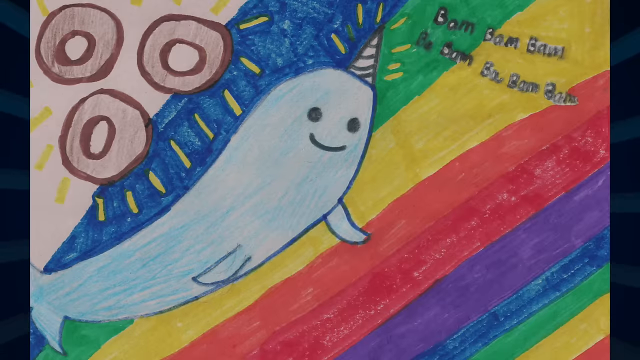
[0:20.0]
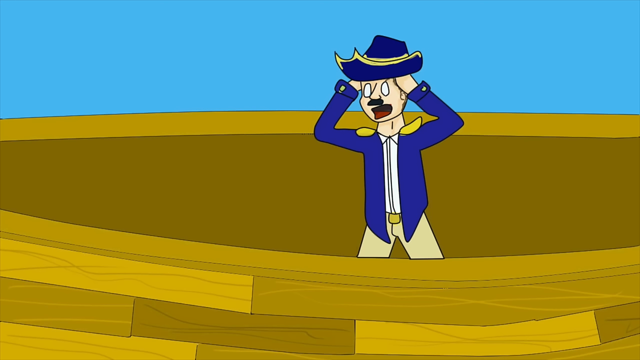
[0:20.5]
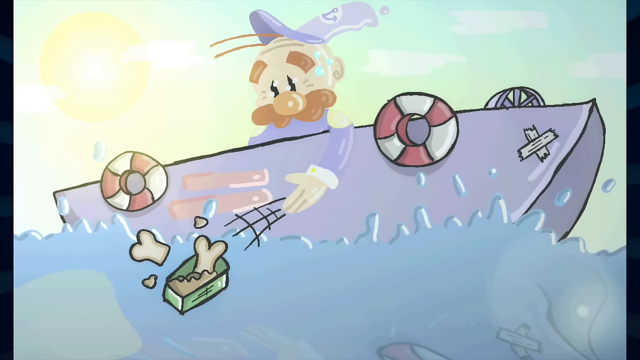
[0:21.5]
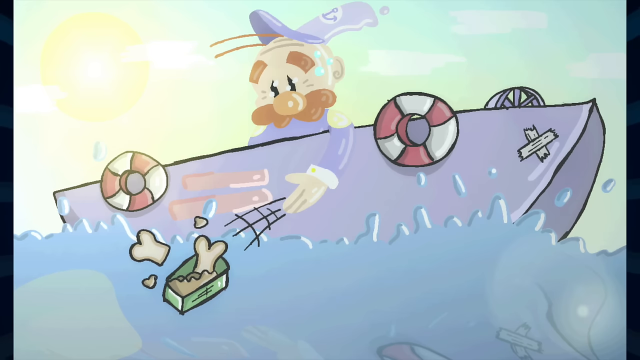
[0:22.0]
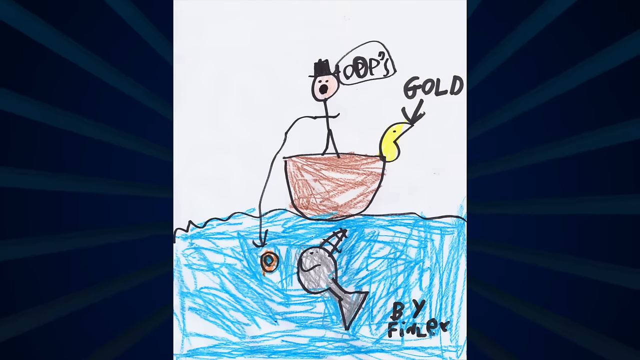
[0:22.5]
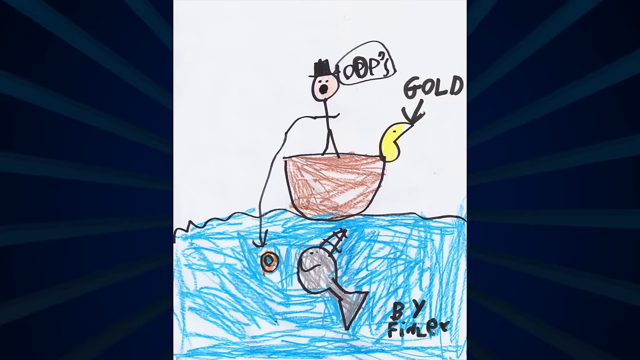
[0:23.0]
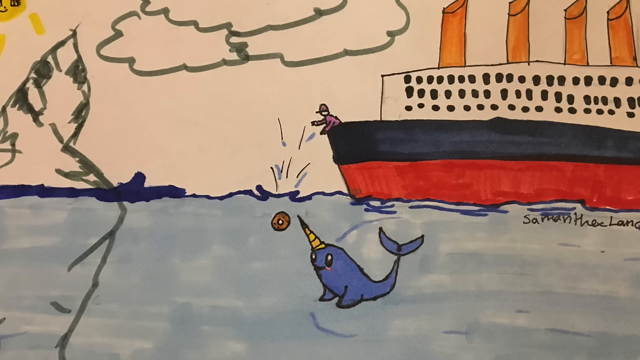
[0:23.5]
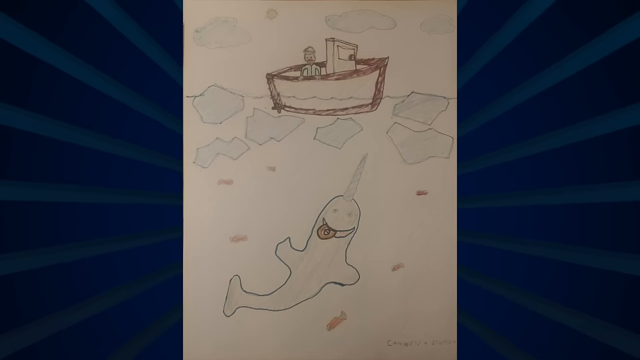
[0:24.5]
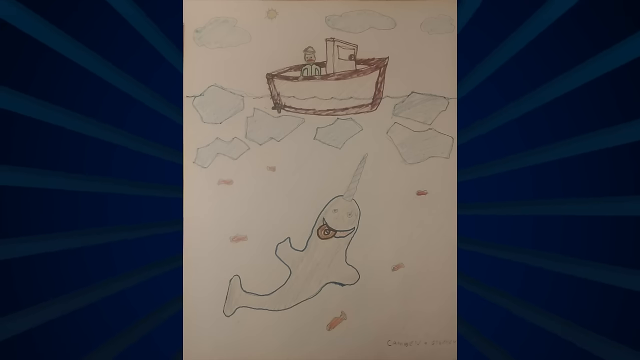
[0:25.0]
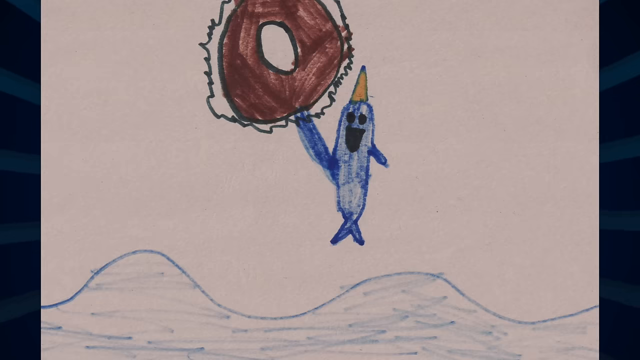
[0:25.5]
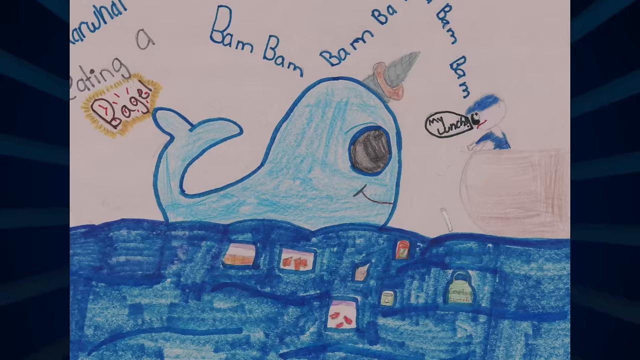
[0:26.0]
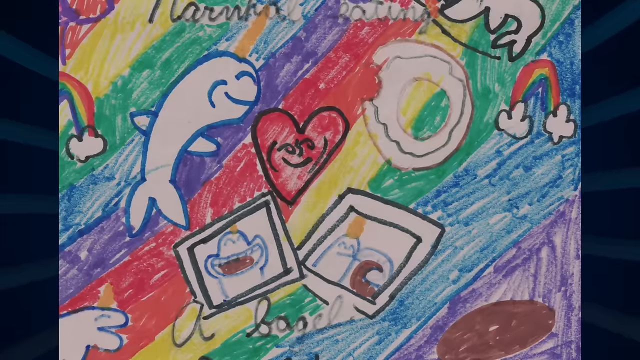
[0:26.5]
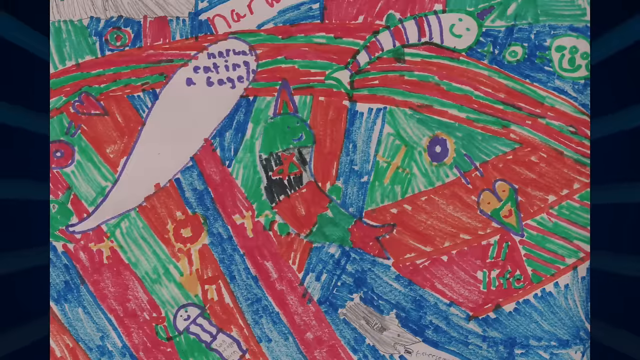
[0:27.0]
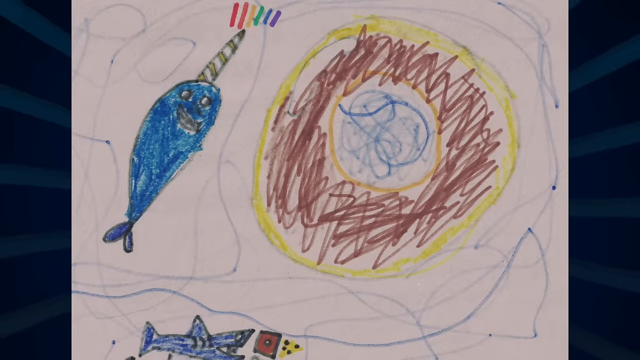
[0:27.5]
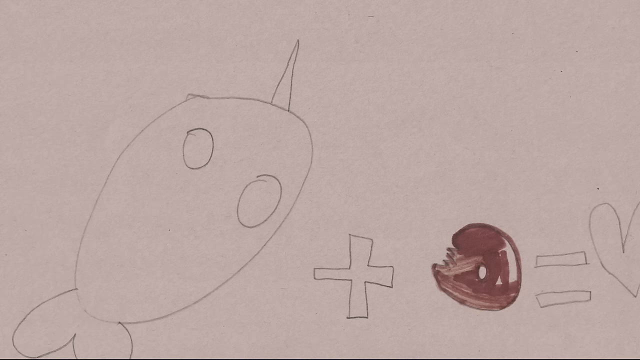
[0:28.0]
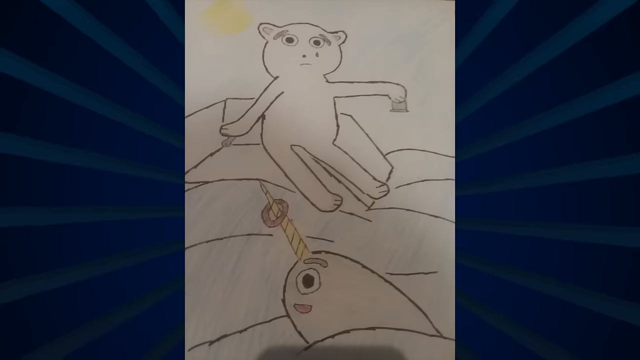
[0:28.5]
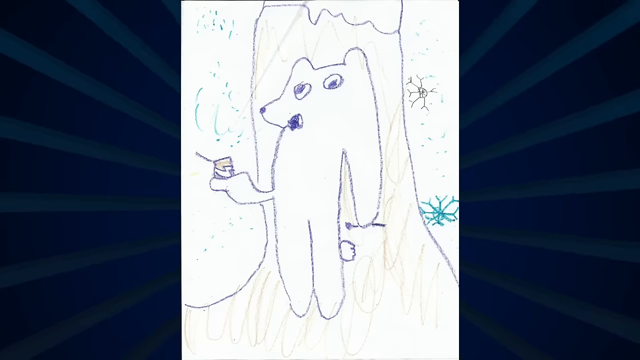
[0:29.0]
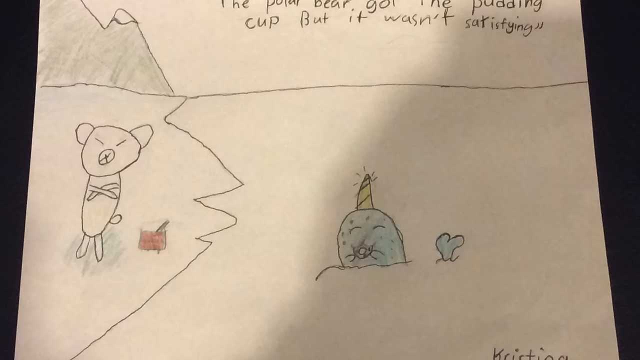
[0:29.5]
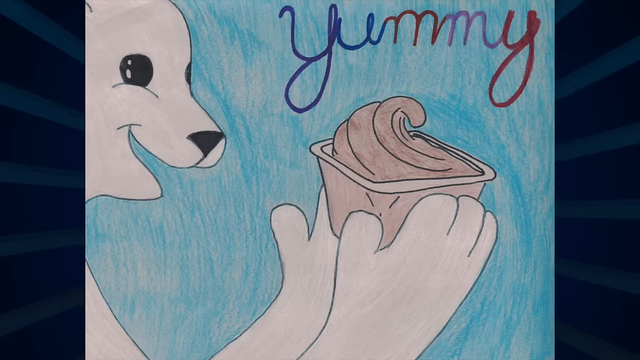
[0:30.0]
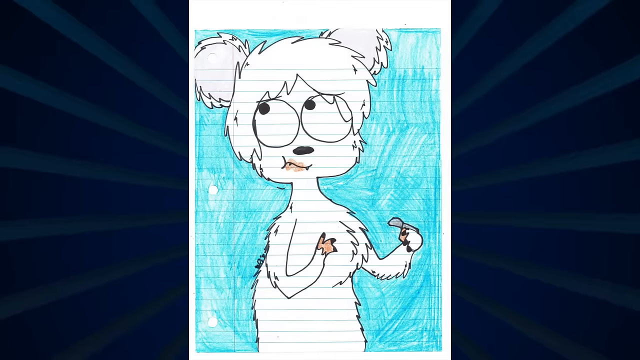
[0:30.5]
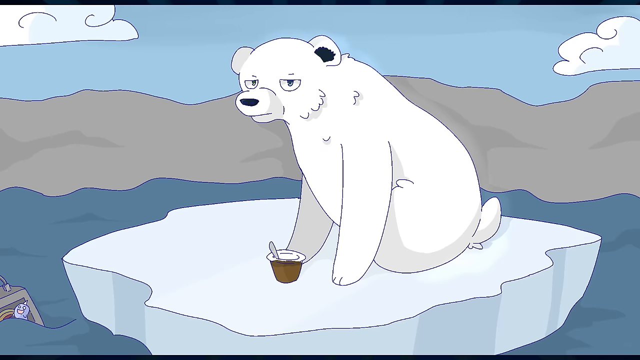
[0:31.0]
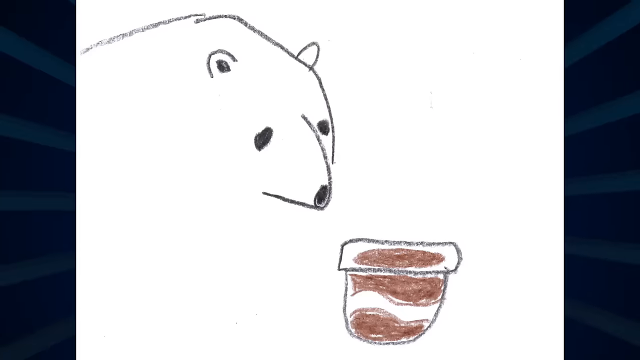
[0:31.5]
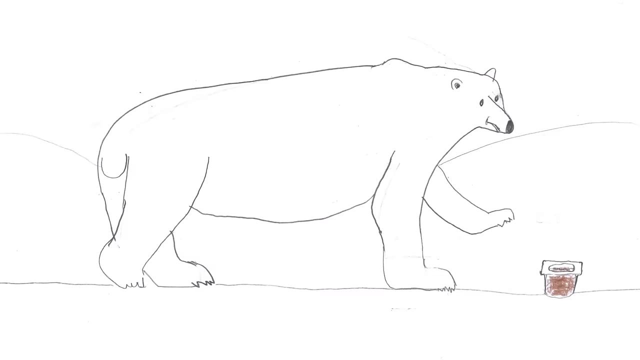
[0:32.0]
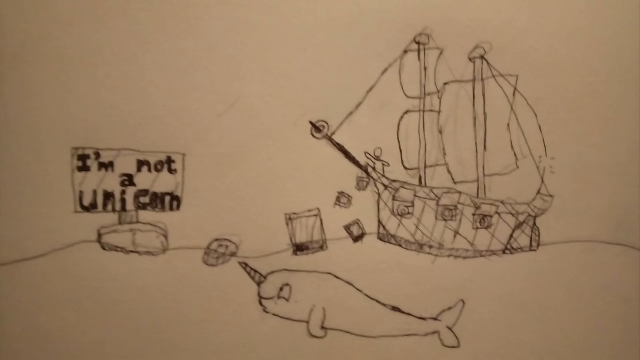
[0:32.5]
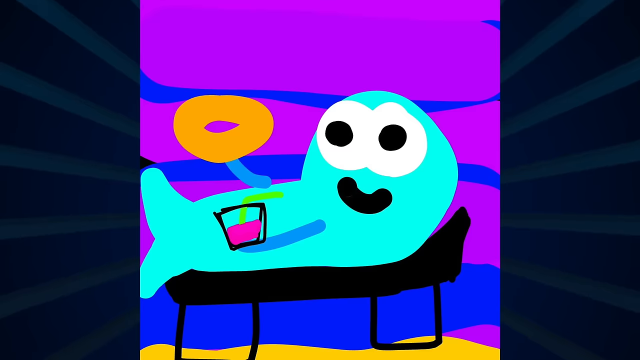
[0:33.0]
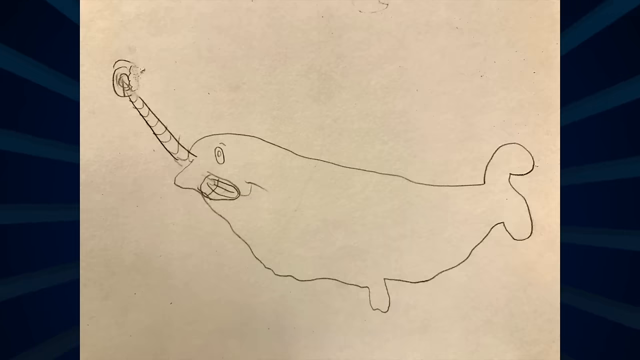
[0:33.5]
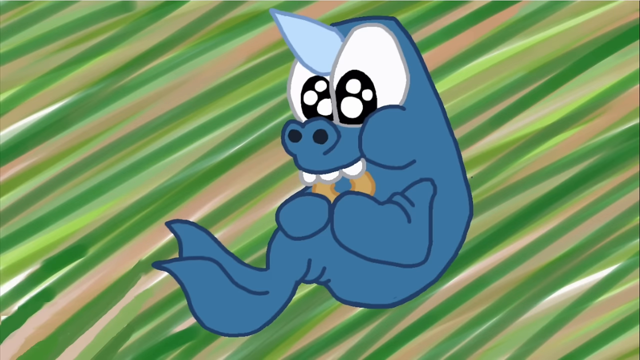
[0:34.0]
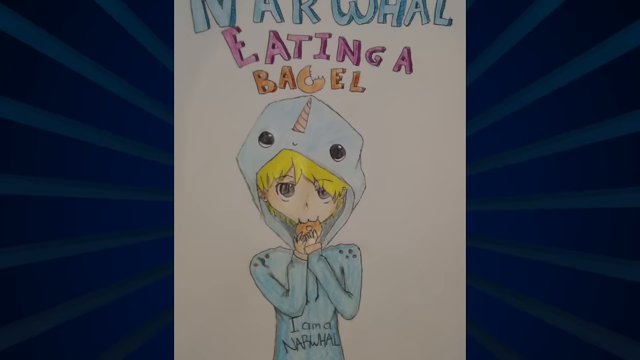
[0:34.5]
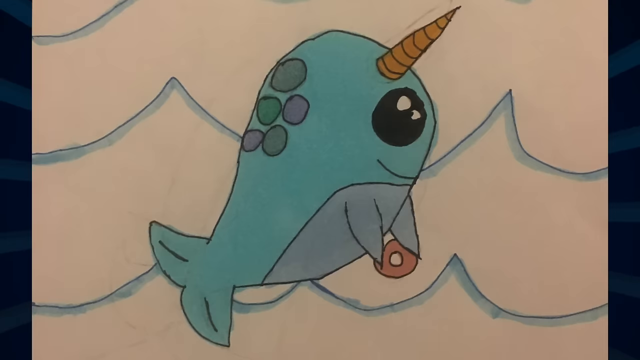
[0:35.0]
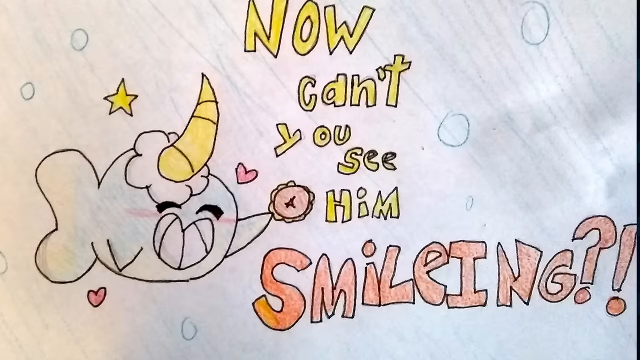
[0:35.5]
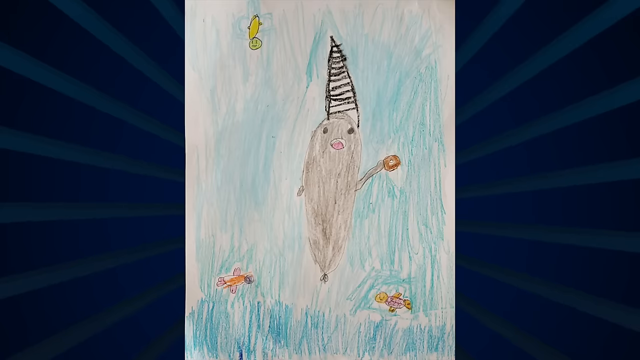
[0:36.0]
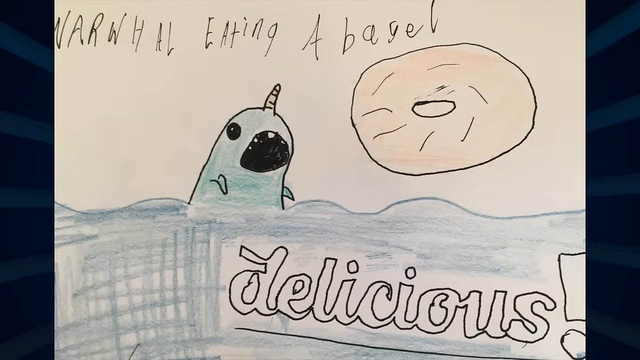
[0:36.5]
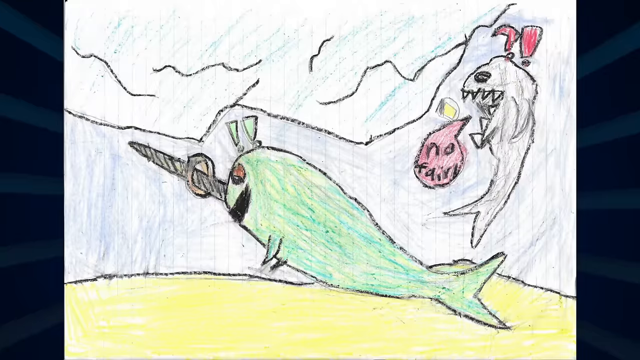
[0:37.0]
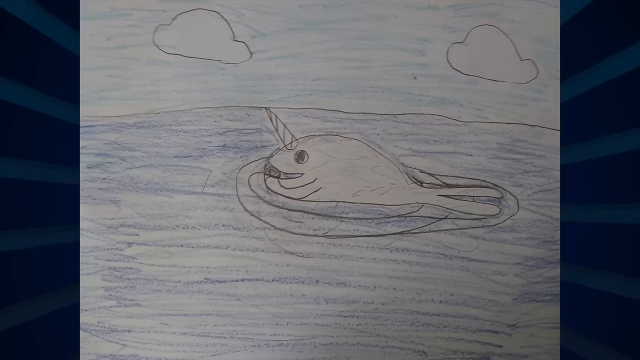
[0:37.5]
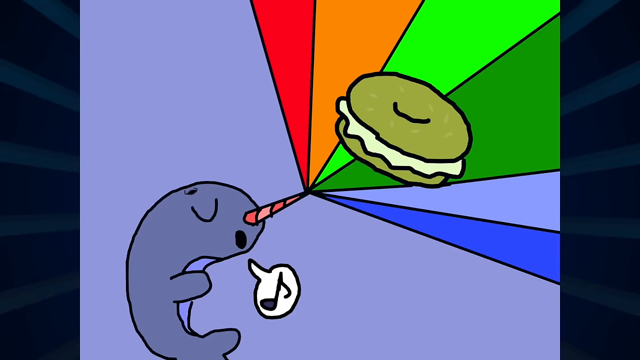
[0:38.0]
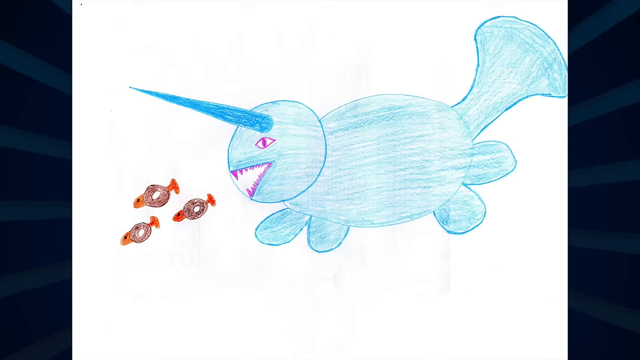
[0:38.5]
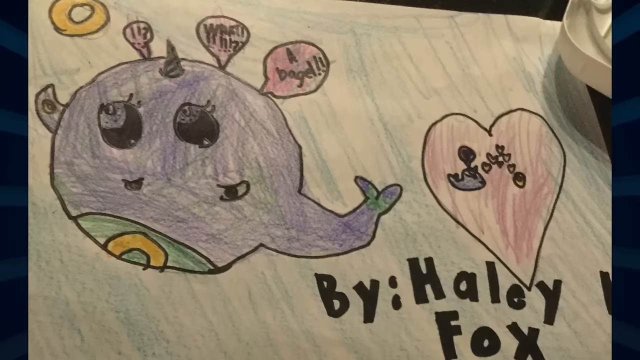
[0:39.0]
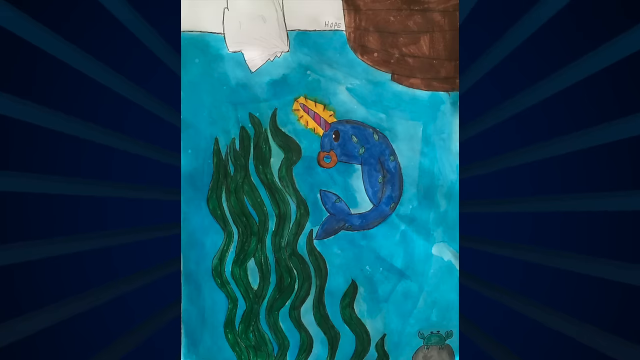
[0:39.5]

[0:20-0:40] The narwhal smiles in front of a rainbow background with three bagels next to it. Next comes a boat captain who looks shocked, then another character on a boat throwing bones overboard. Another picture shows a stick figure fishing while the narwhal swims in the ocean toward the bagel. Another shows someone feeding the narwhal a bagel by throwing it off a ship. One drawing shows the narwhal plus a bagel equals love. There are multiple drawings of the narwhal and the bagel. Next, what appears to be a polar bear holds an empty container while the narwhal smiles near it with a bagel on its horn. One drawing indicates that the polar bear got the pudding cup but it wasn't satisfying, while the narwhal enjoys its bagel. One drawing shows a polar bear eating chocolate pudding with the word "yummy" next to it. Multiple drawings show polar bears eating chocolate pudding, followed by a few more narwhals eating bagels.